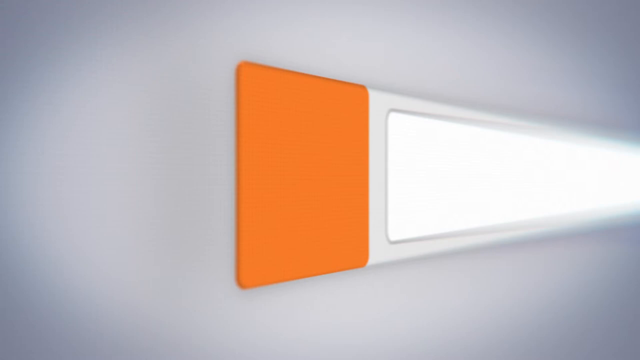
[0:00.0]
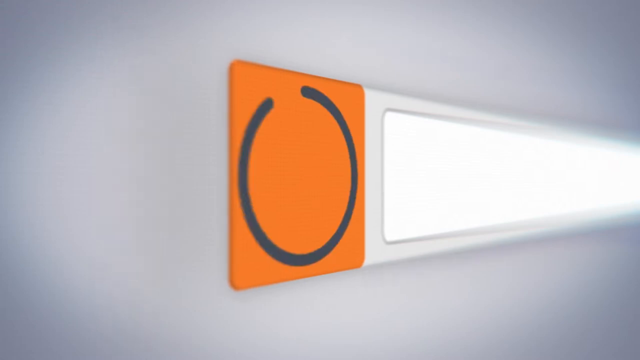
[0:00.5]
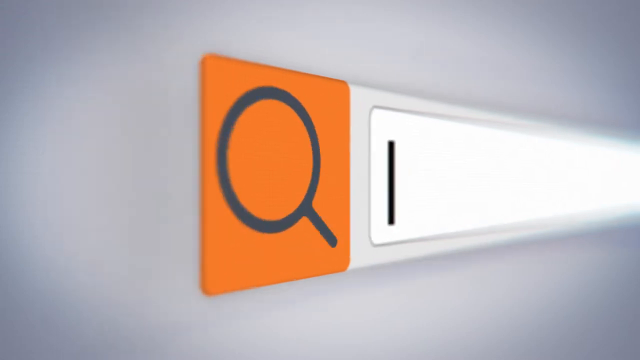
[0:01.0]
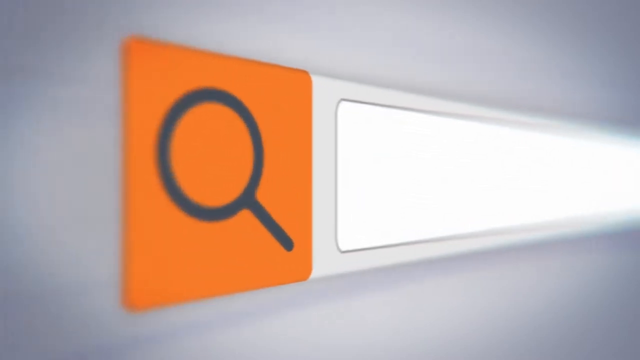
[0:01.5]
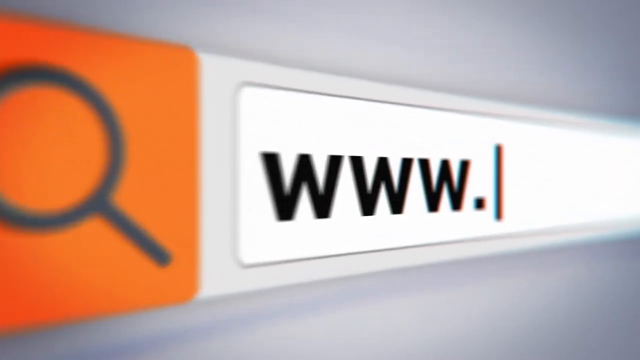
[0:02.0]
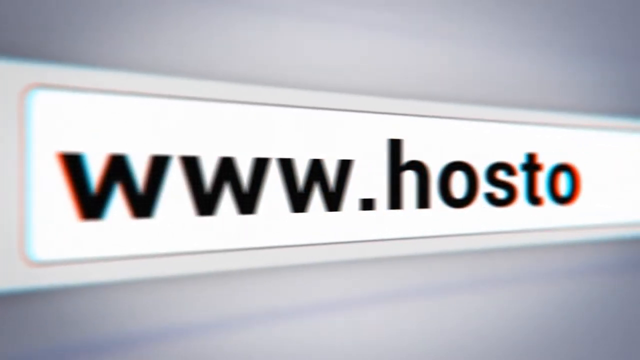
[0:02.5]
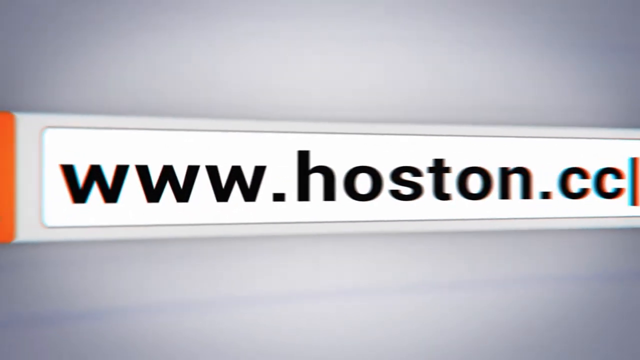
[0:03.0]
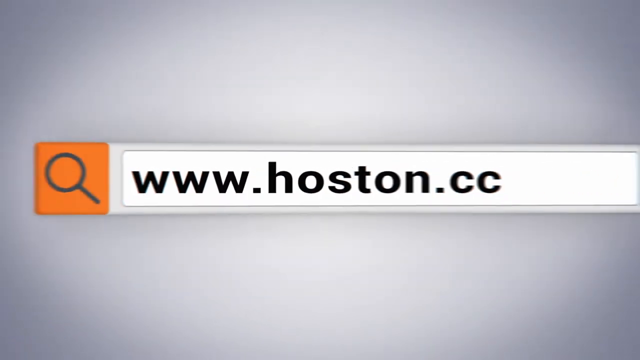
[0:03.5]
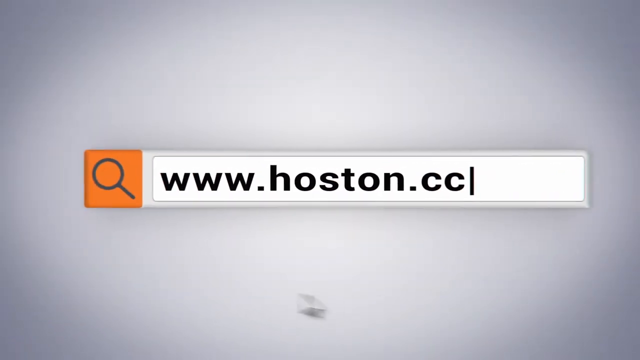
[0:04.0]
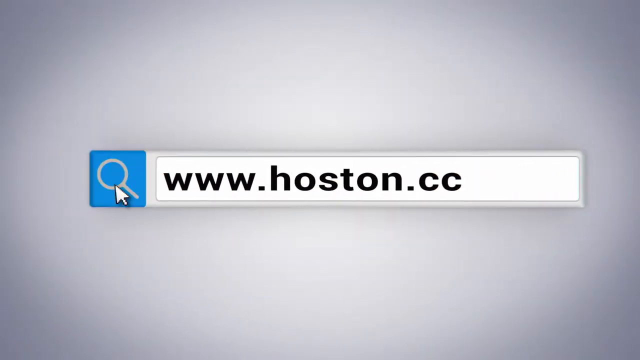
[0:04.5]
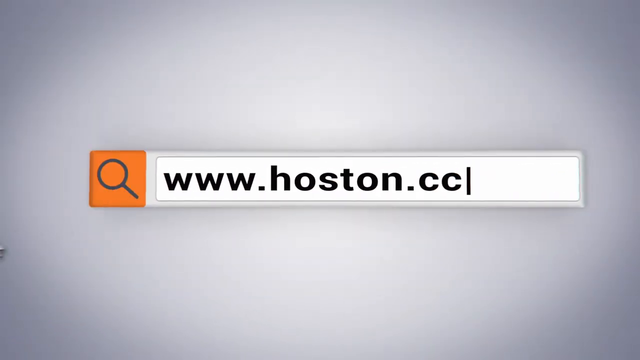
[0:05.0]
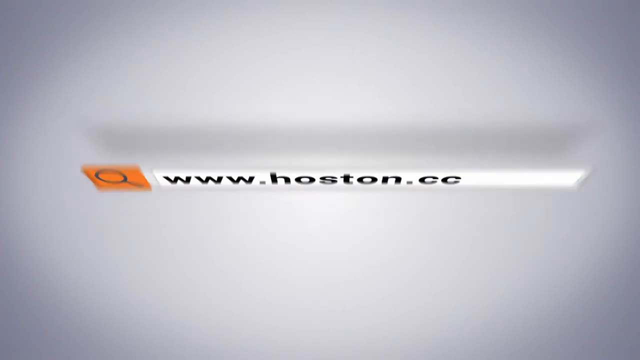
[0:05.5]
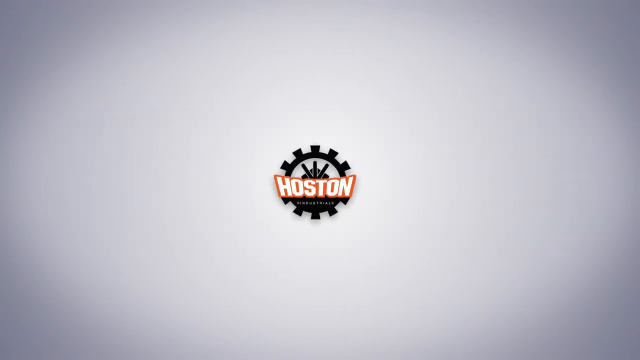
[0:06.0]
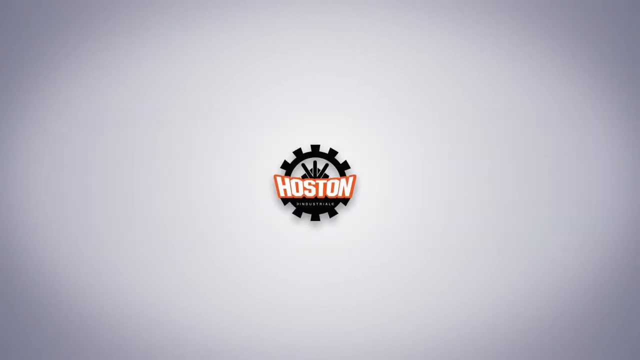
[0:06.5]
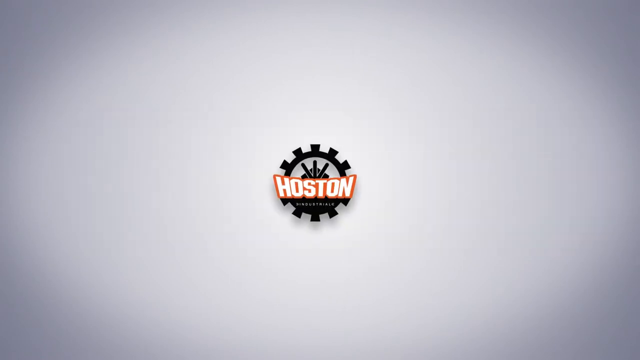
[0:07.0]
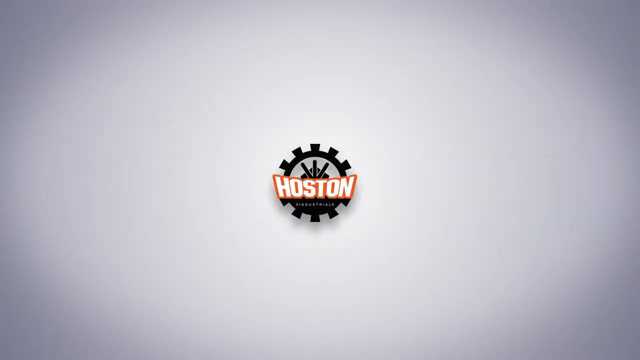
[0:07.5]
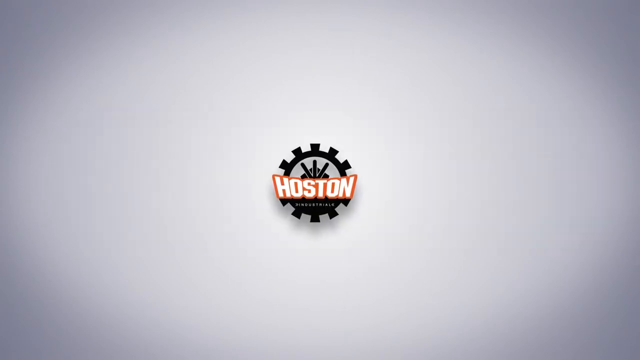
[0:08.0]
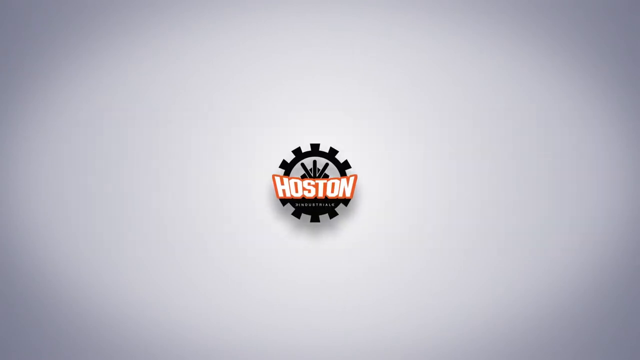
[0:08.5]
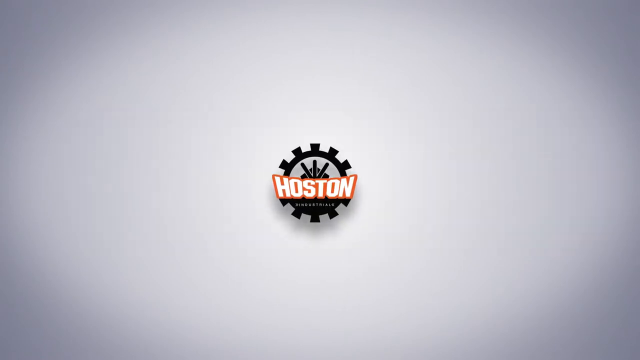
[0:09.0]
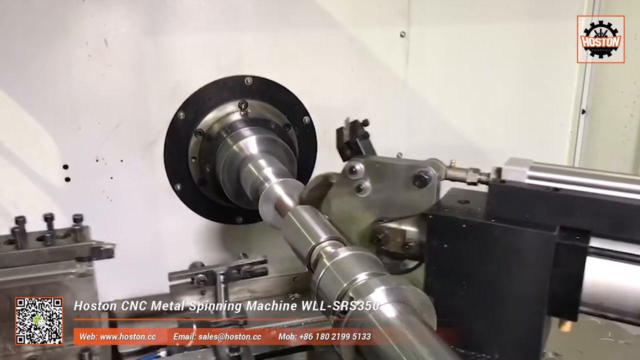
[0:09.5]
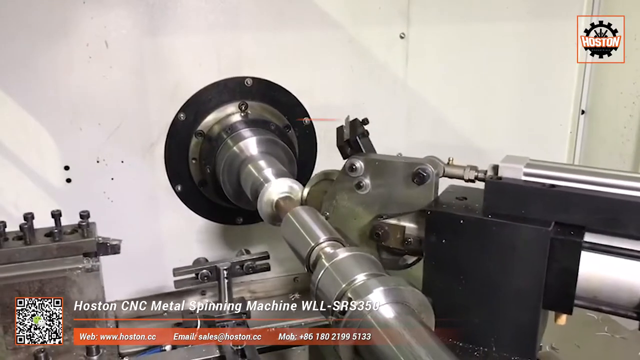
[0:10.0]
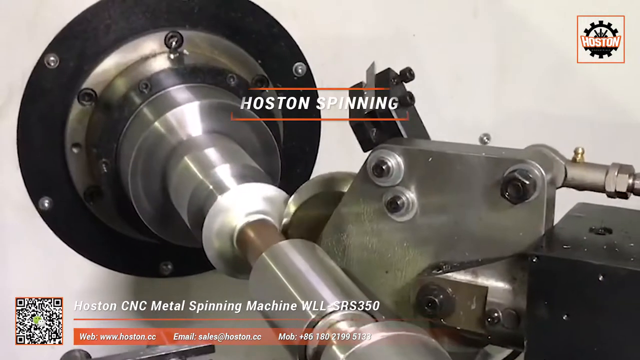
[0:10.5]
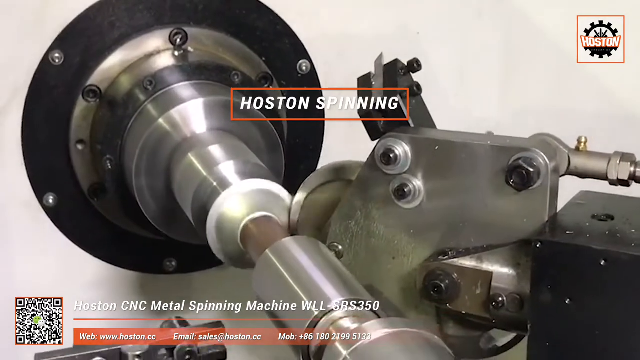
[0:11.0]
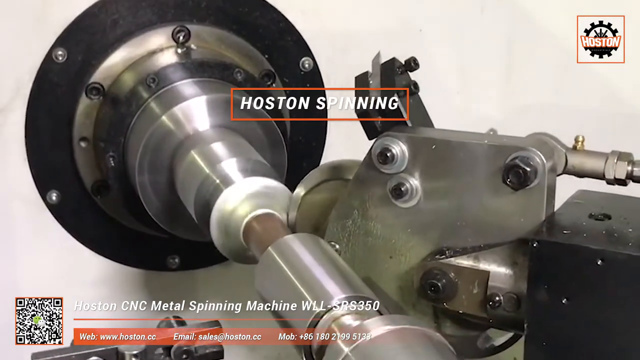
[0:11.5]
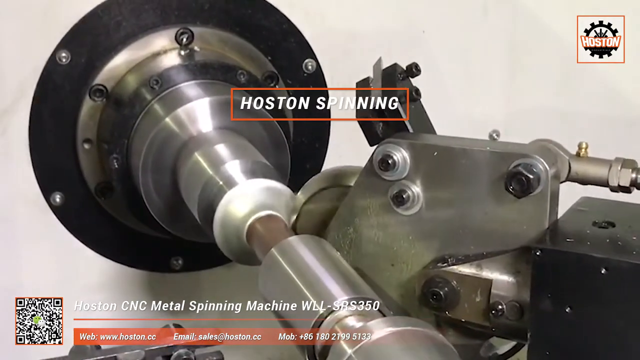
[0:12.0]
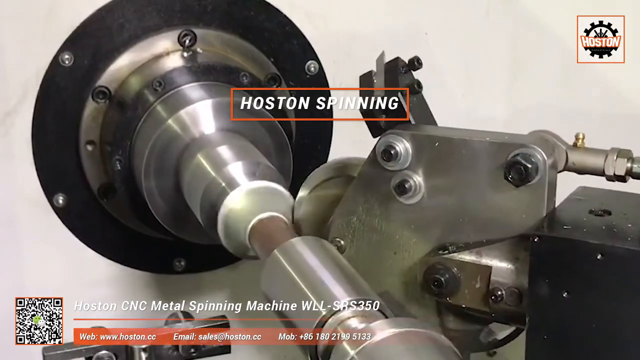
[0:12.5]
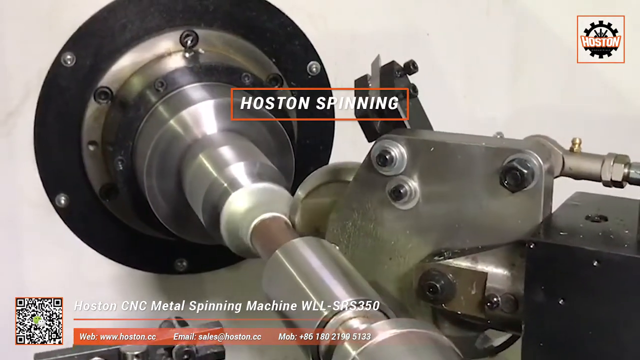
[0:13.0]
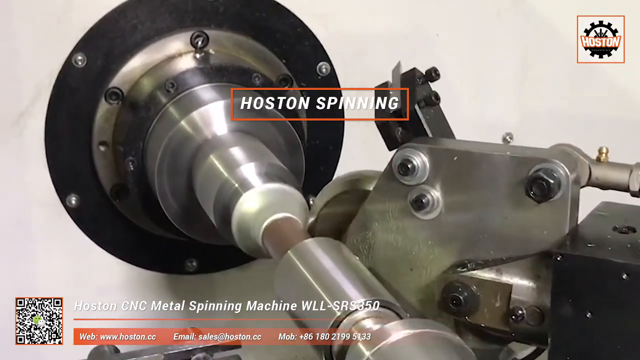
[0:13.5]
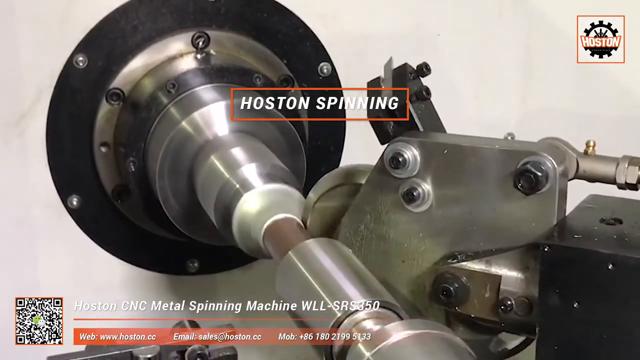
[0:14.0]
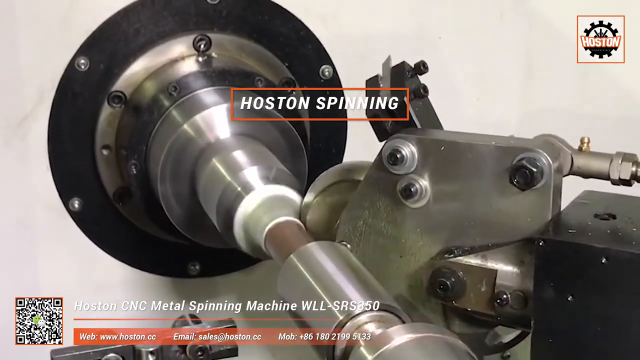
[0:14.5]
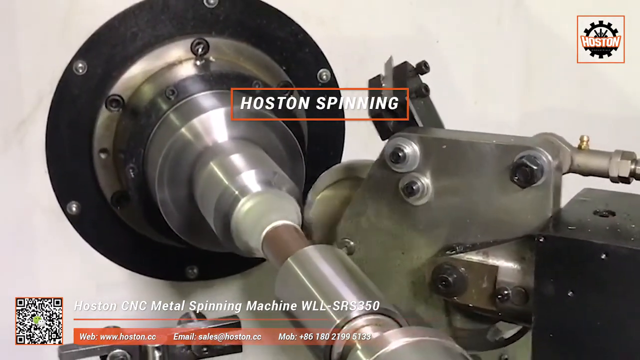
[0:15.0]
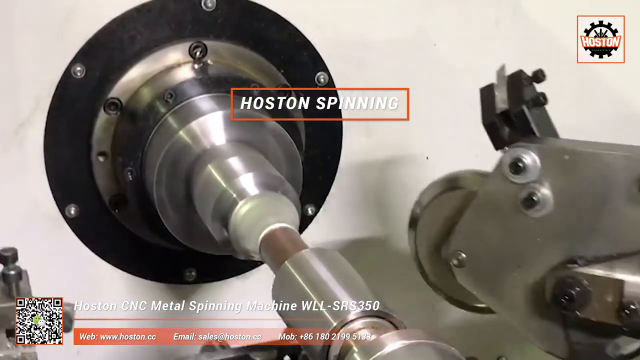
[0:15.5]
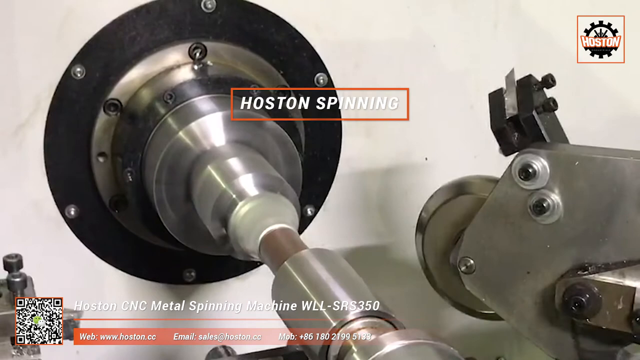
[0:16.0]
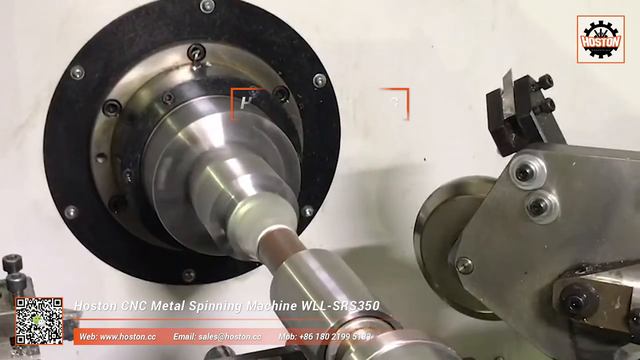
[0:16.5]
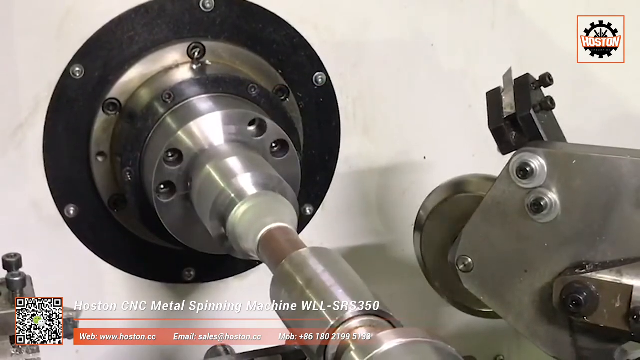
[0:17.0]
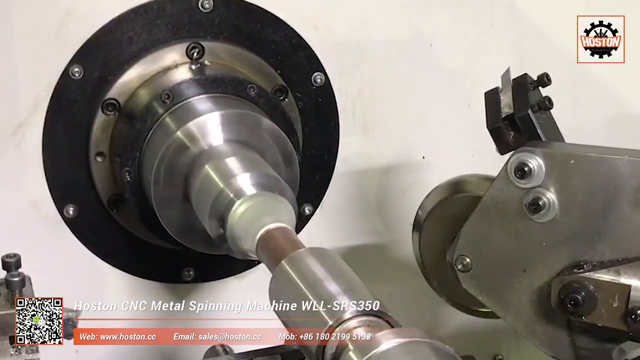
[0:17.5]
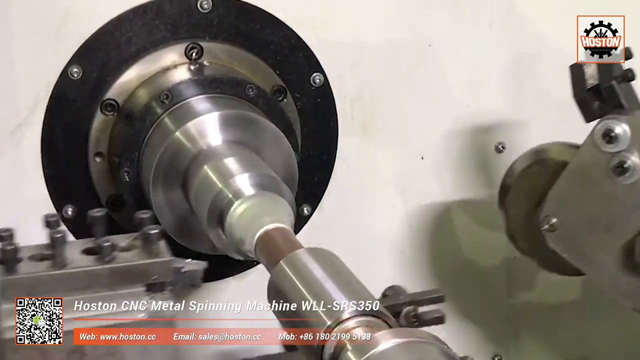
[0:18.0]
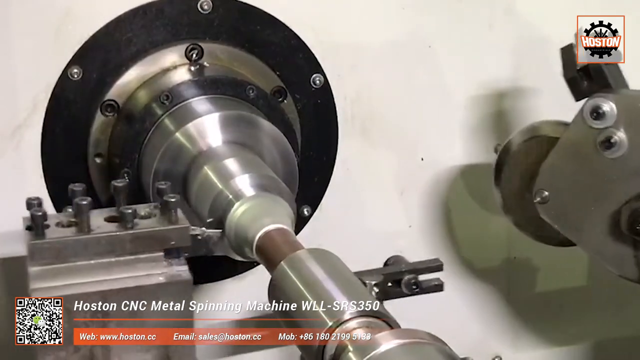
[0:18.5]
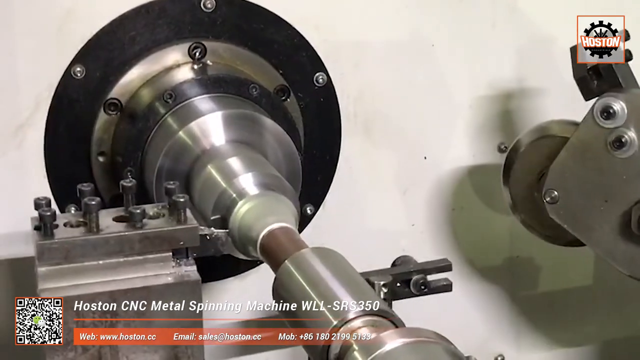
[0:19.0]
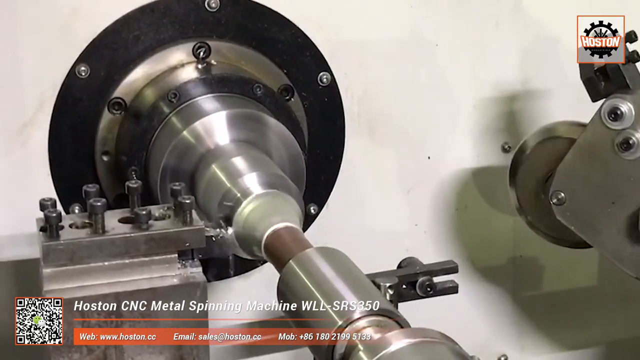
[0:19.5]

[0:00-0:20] What looks like a commercial of some sort opens on what appears to be a search box: the box is white, with a black magnifying glass on an orange background next to it. The search box is filled with the URL address "www.hostom.cc". The video continues to the Hostom logo, showing that the search has taken the user to this point. Finally, a piece of machinery appears in a workshop: what looks like a shiny silver metal bar is being cut by a device with a very sharp wheel, which goes back and forth and reduces the piece of metal into a pipe shape cut to a very exacting dimension. No people are seen in the workshop. It appears to be an advertisement of some sort.